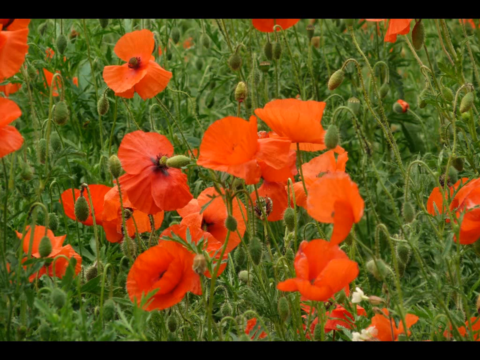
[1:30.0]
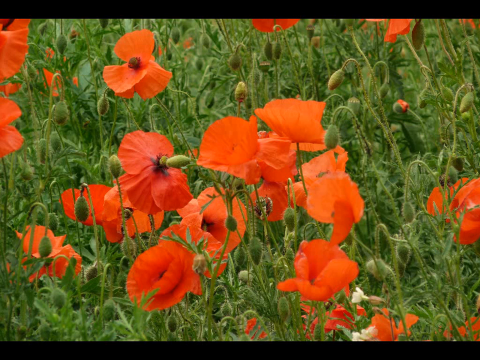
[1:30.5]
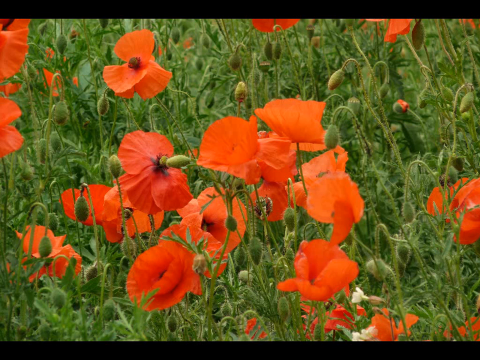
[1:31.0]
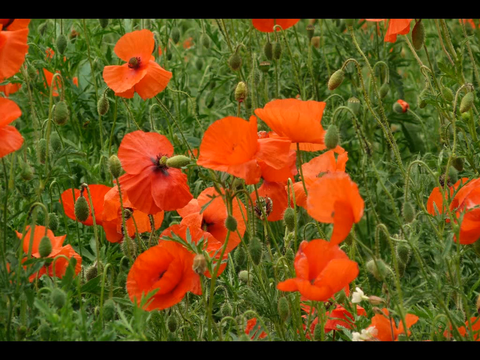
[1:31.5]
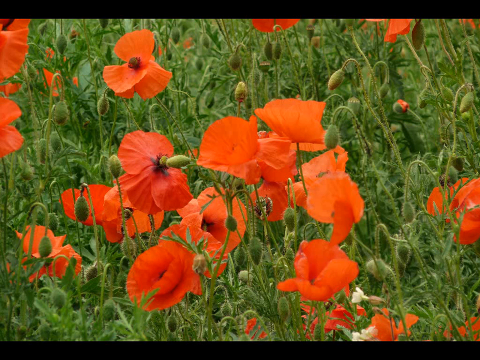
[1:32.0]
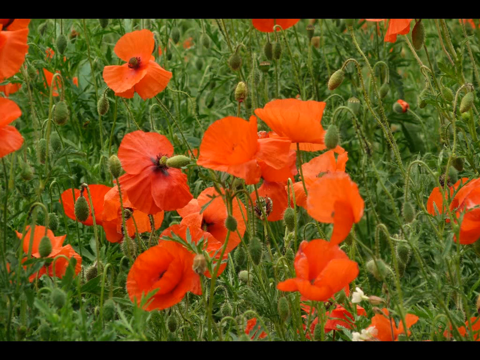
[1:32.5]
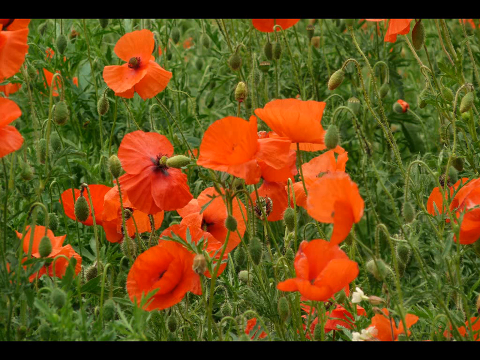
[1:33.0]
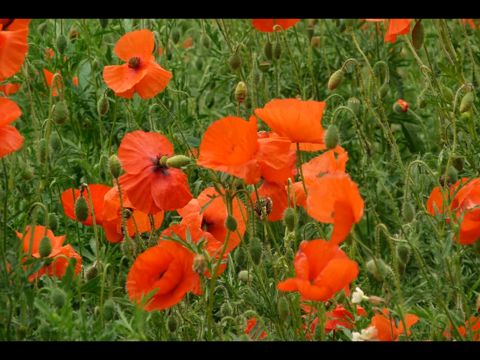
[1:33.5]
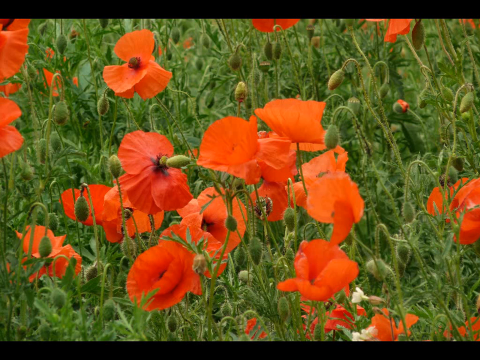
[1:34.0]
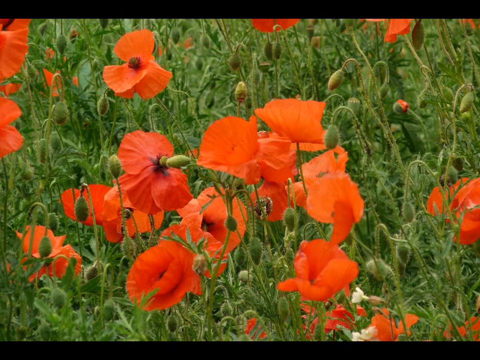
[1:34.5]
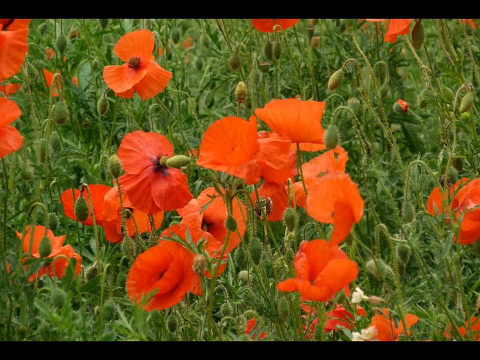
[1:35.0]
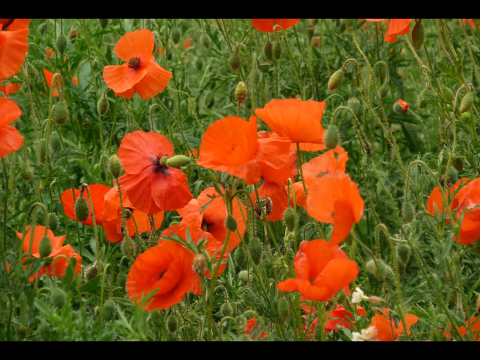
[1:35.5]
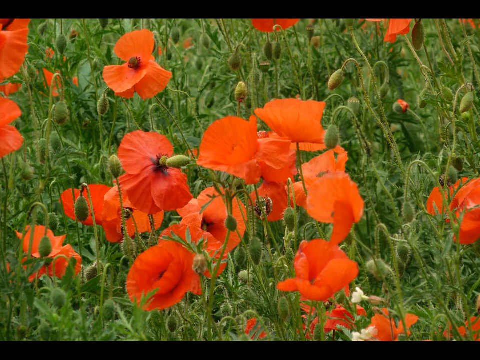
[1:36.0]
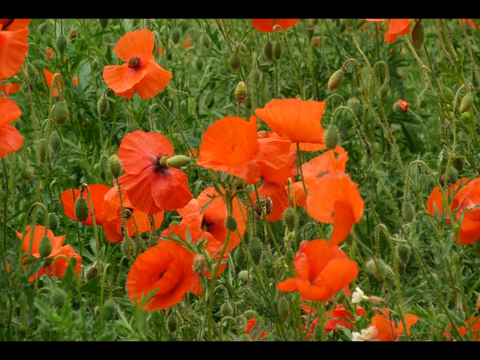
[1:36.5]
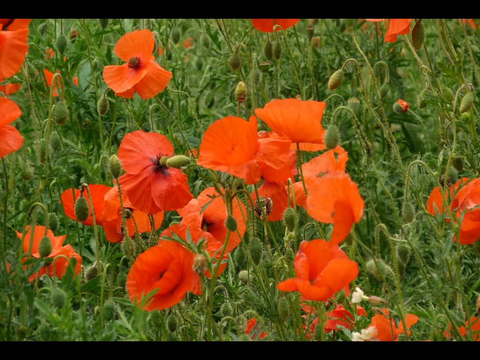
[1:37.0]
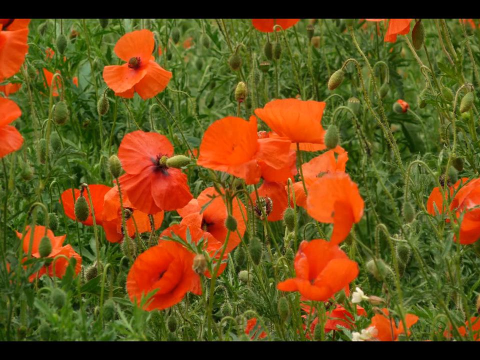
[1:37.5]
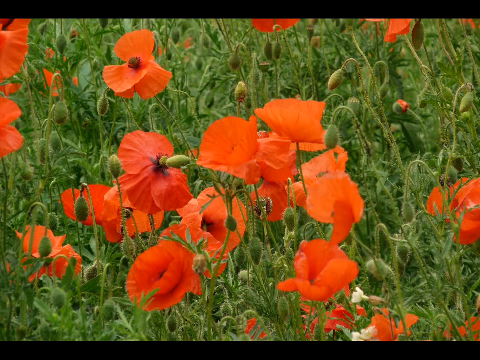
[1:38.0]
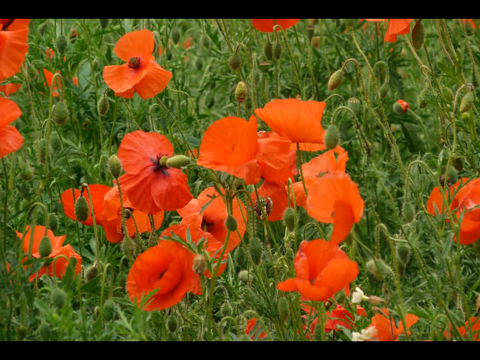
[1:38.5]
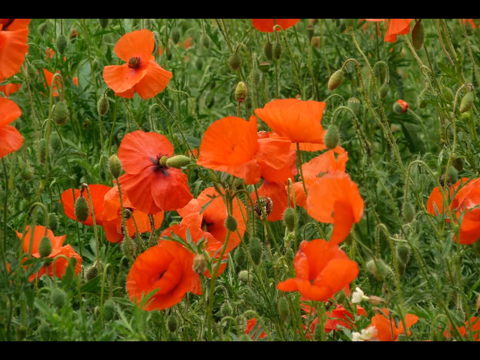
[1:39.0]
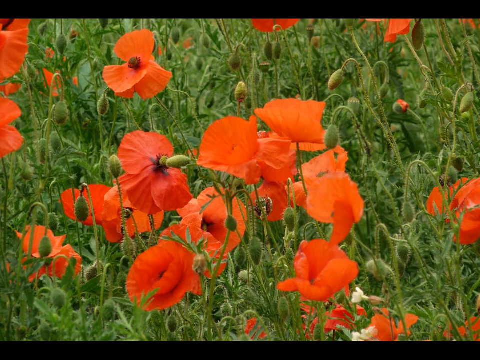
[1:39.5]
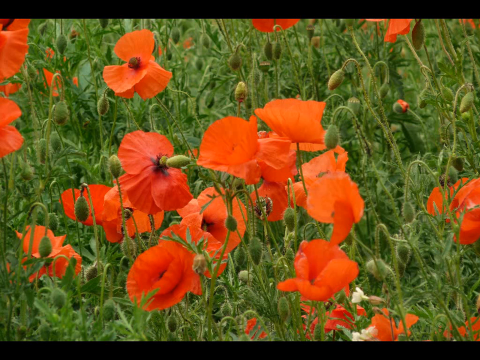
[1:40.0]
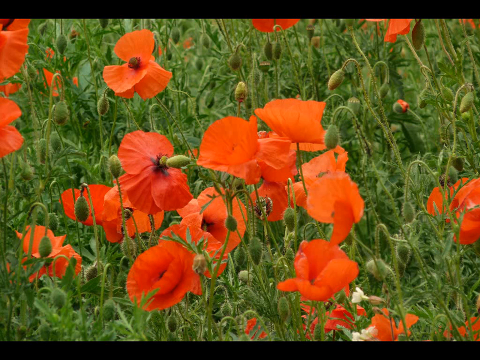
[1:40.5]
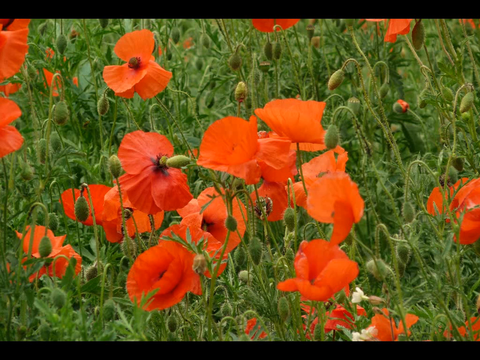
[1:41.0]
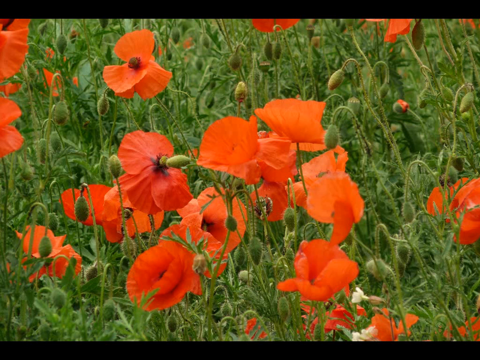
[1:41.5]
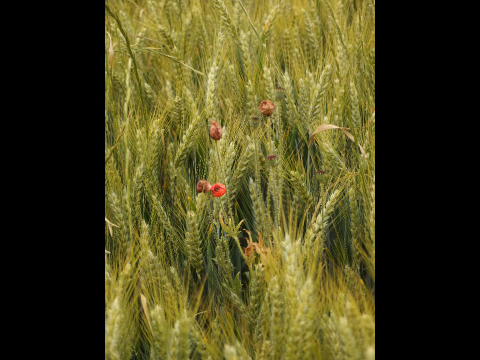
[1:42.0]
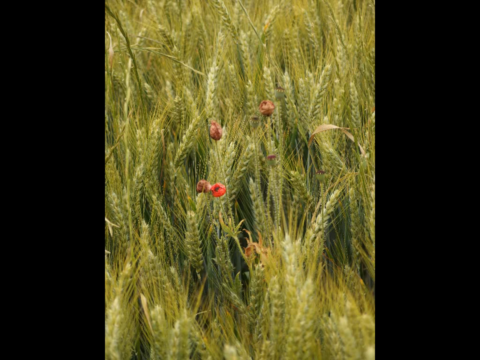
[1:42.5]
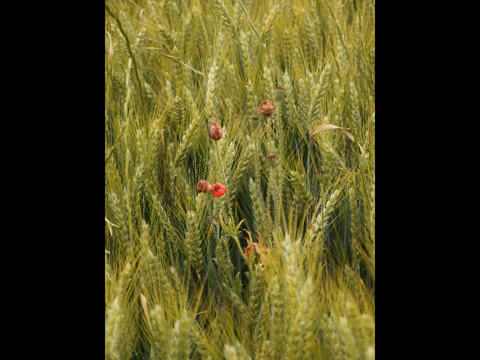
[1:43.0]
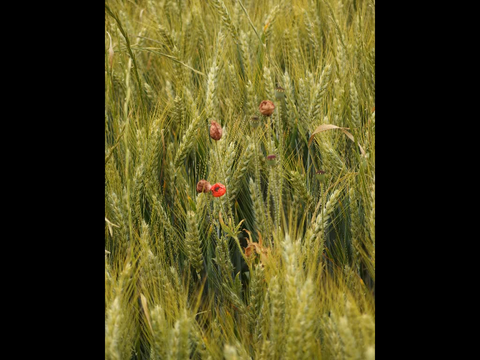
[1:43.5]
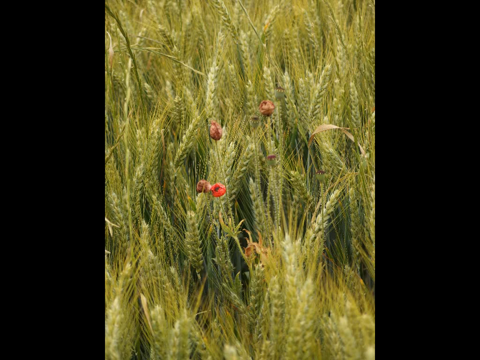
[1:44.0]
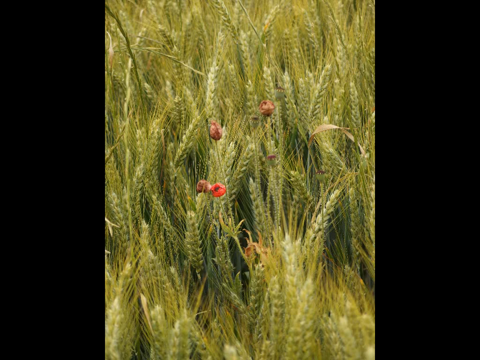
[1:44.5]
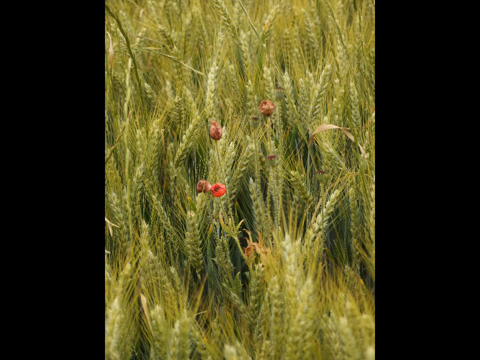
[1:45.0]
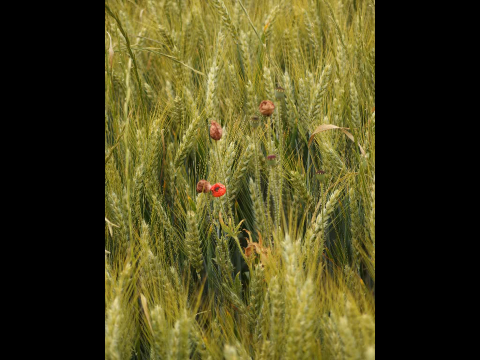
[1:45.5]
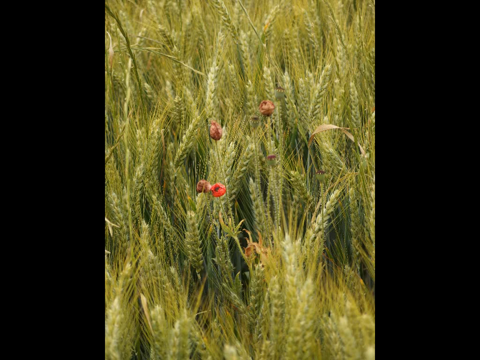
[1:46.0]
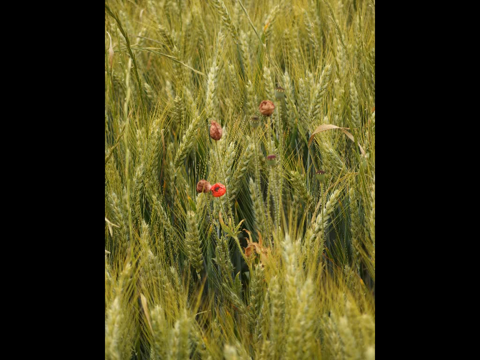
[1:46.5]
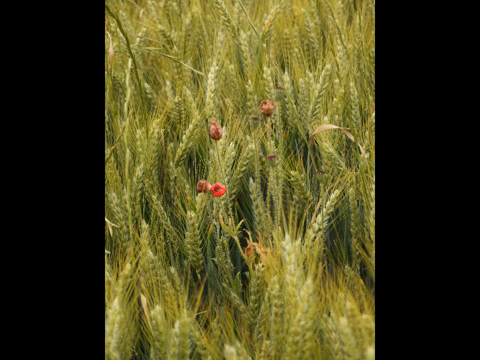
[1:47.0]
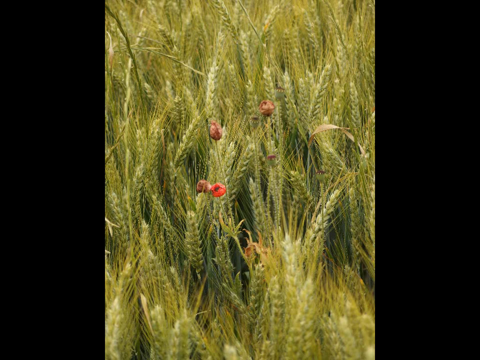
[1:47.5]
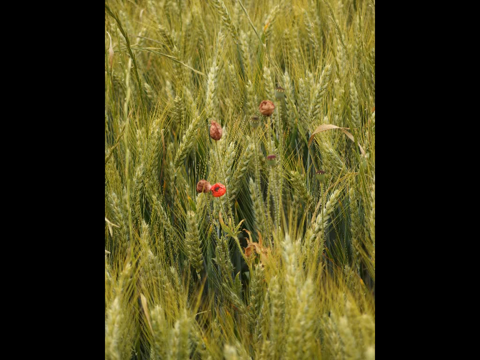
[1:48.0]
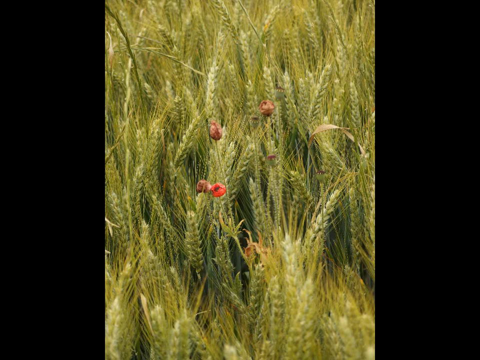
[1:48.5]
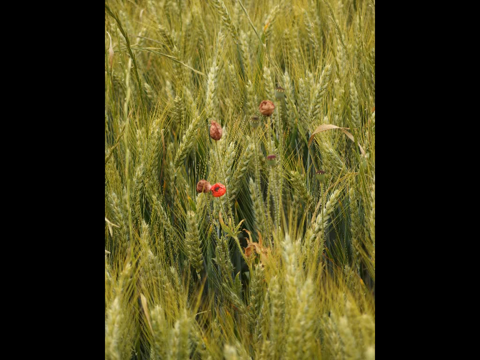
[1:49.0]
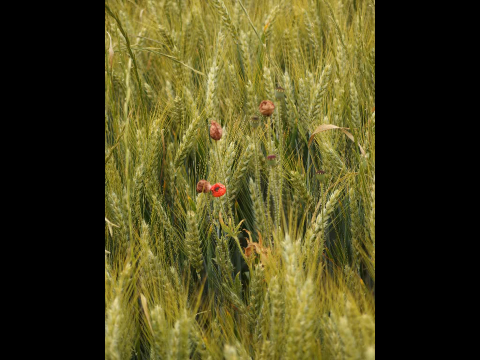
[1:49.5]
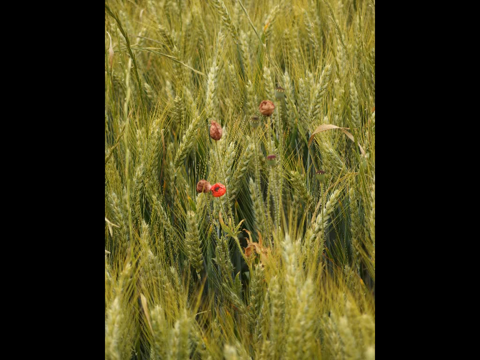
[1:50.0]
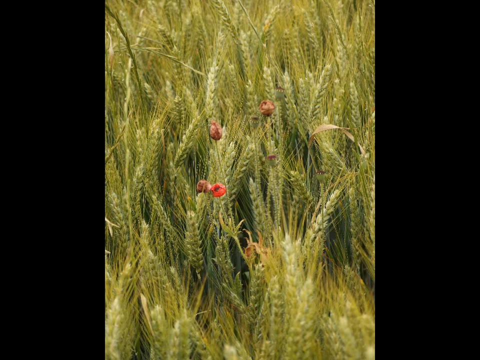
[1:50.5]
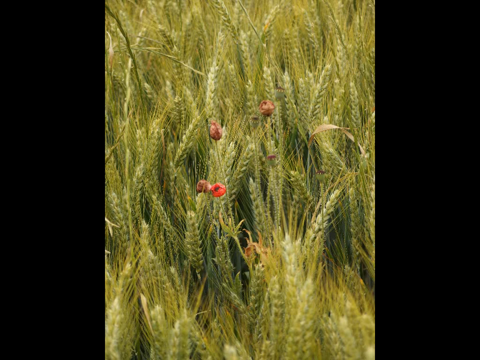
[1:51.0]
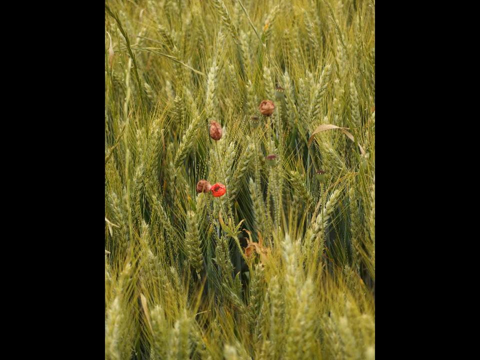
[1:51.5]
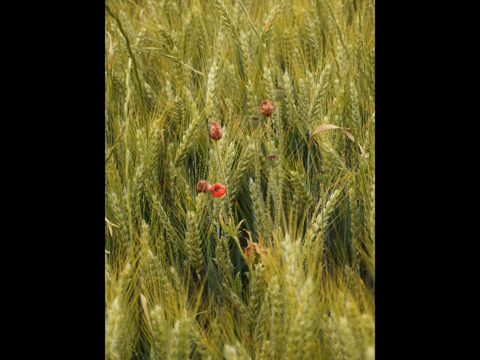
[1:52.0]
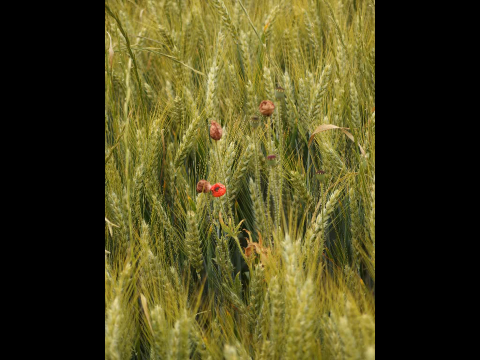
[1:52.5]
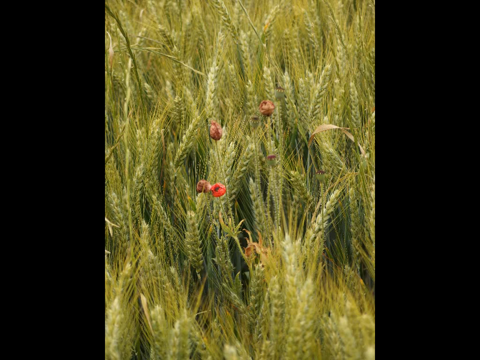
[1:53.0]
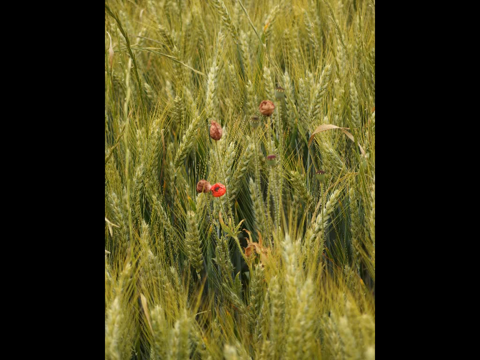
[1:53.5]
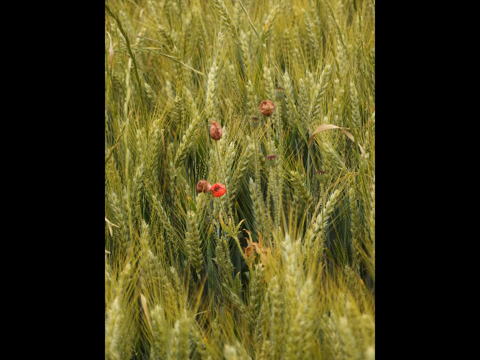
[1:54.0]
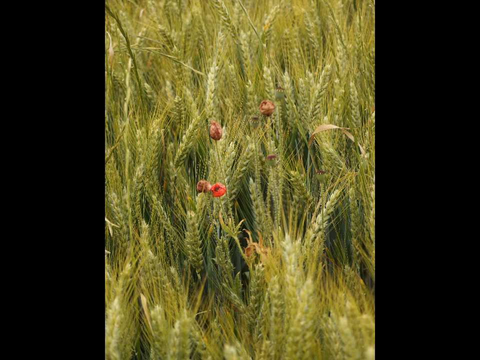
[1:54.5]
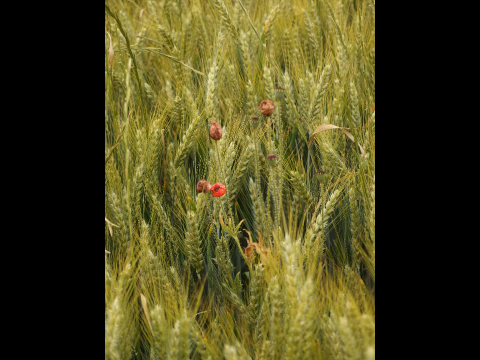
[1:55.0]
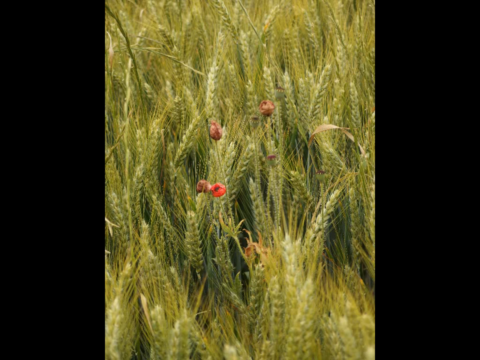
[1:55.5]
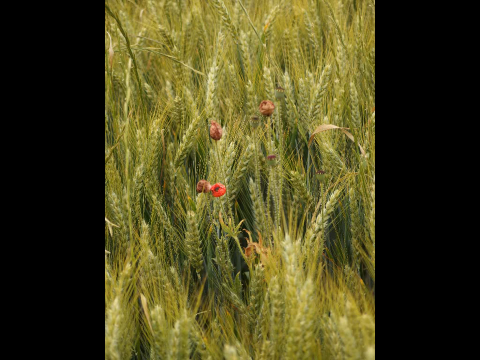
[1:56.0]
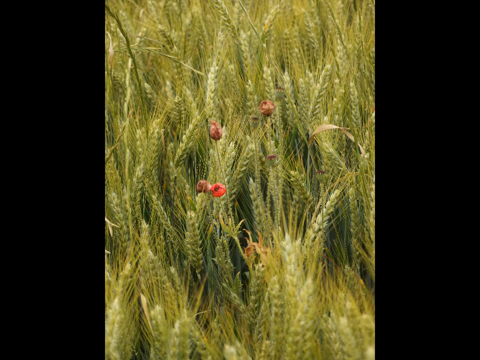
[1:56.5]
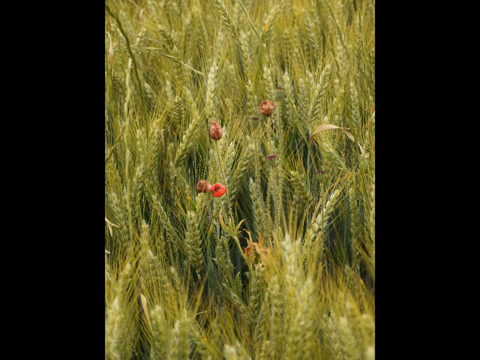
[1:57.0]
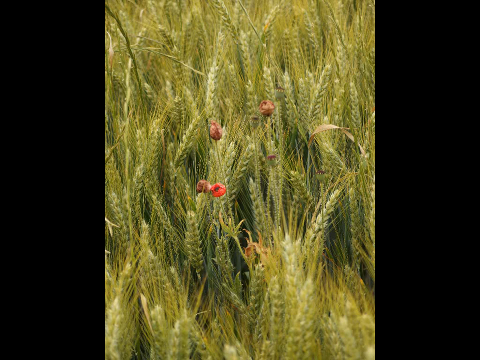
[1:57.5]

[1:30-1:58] Large orange flowers that almost look like golden poppies, though it is hard to tell, are mixed with other flowers that have not yet bloomed and with green grass. The scene then shows what looks like a cornfield. In the center are some very small, circular, light brown objects, and one light red circular object.